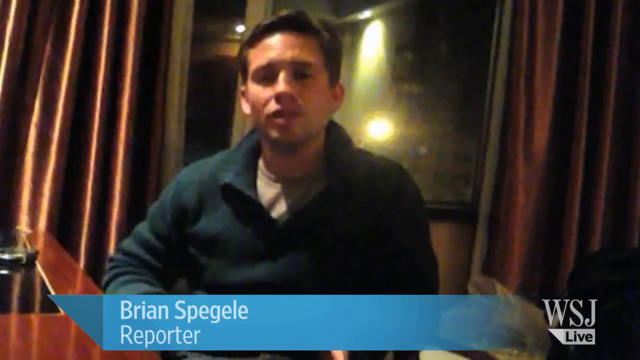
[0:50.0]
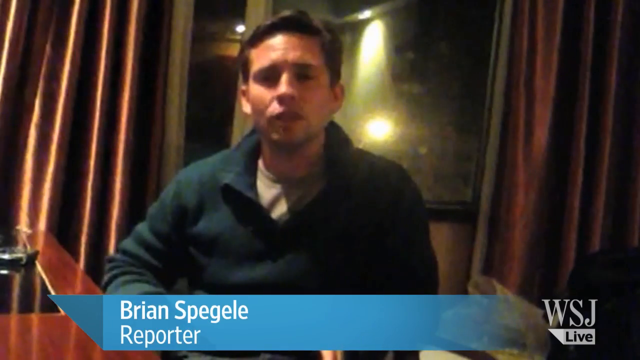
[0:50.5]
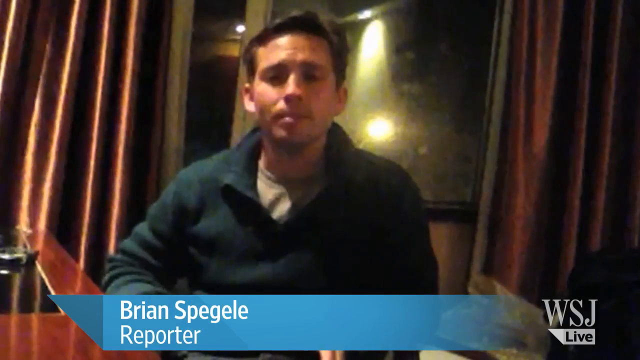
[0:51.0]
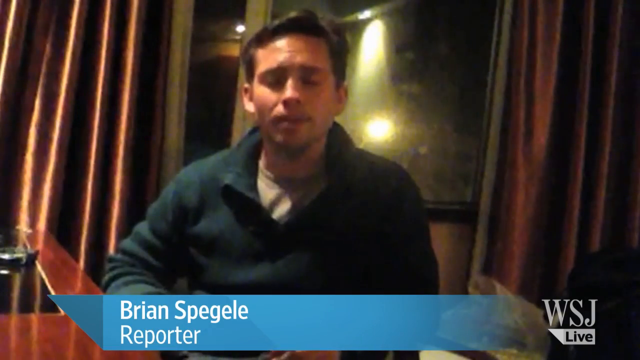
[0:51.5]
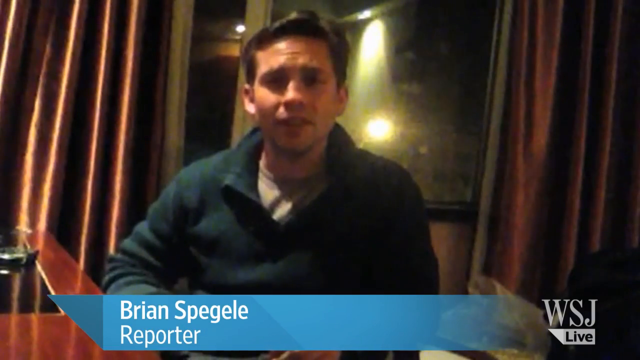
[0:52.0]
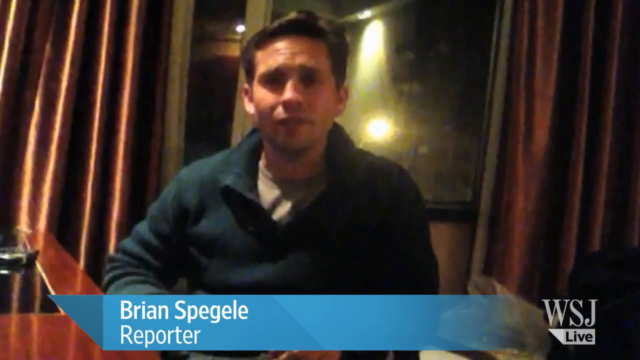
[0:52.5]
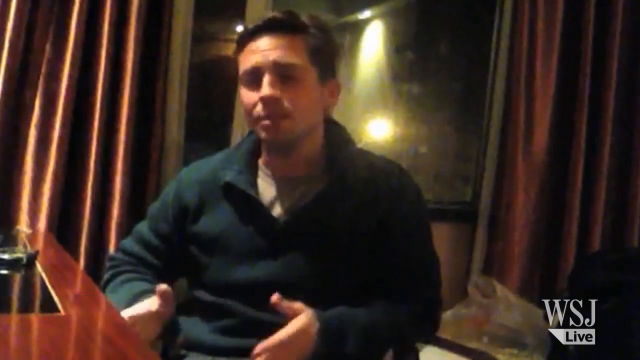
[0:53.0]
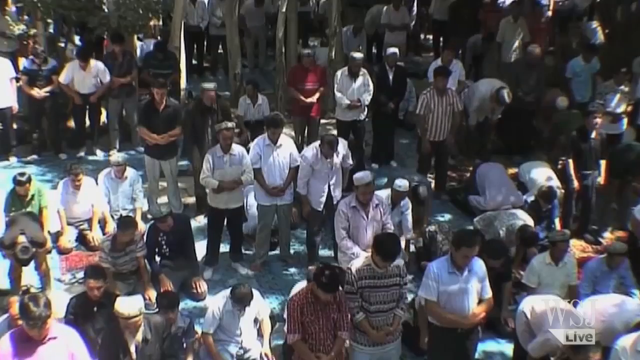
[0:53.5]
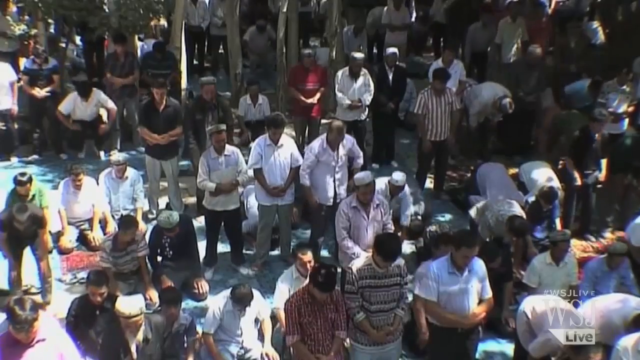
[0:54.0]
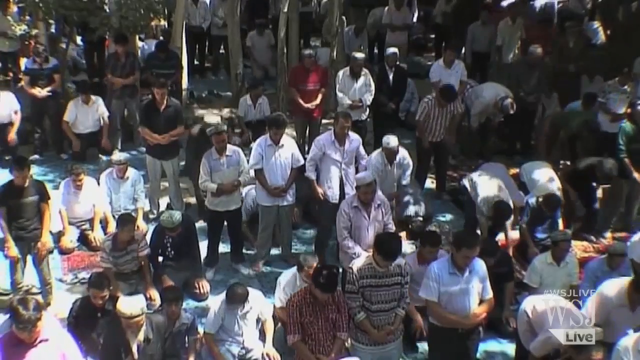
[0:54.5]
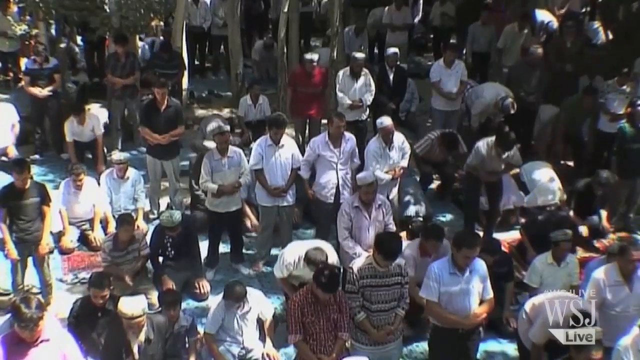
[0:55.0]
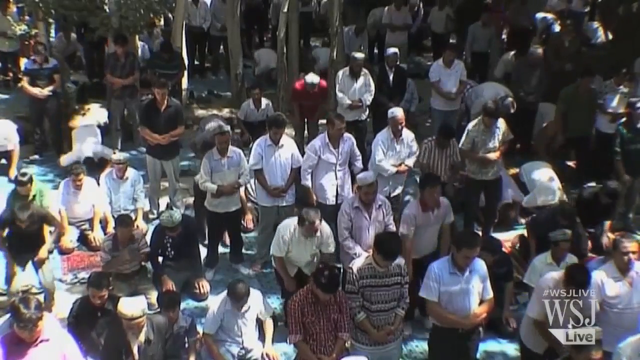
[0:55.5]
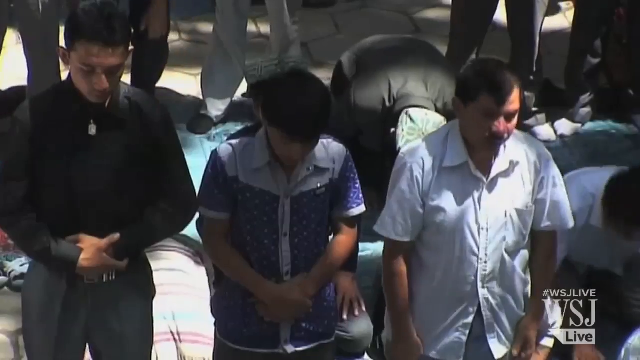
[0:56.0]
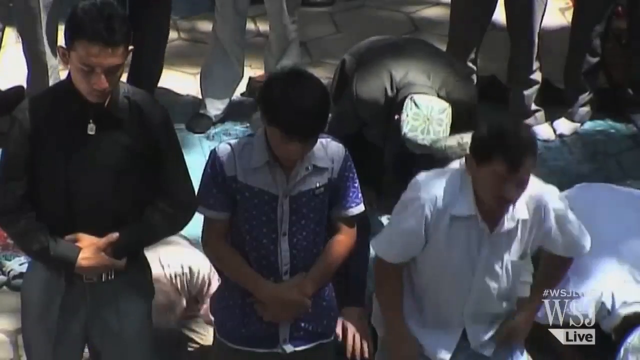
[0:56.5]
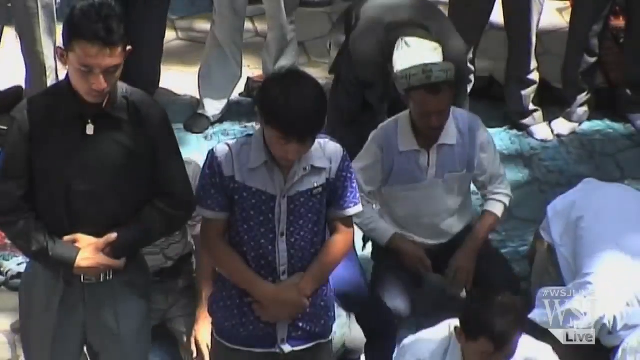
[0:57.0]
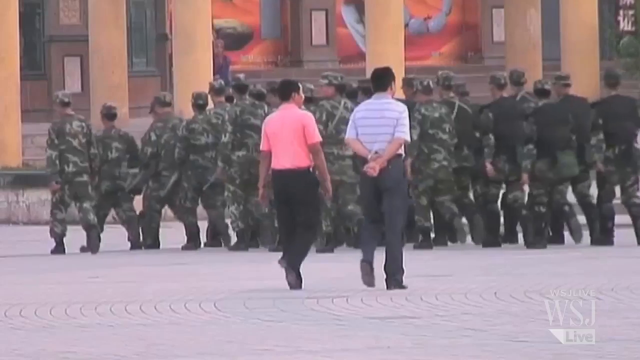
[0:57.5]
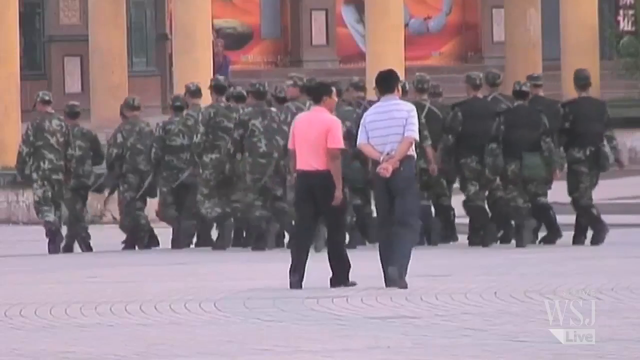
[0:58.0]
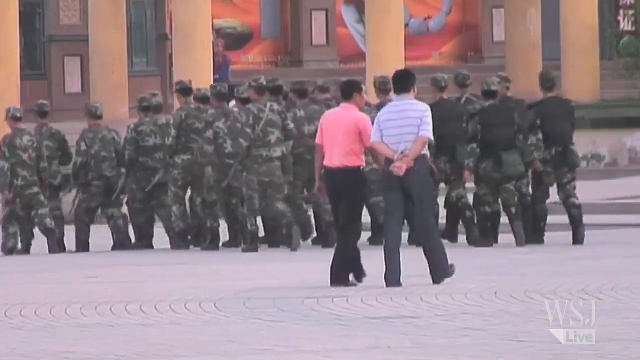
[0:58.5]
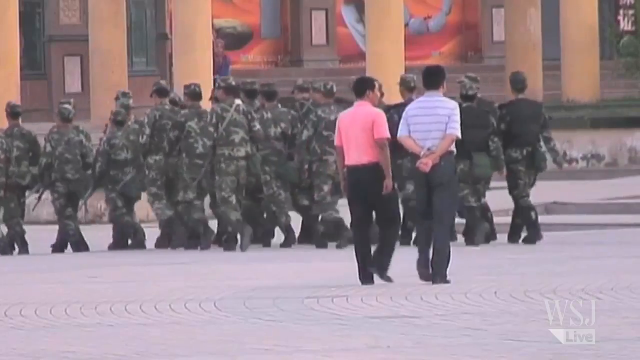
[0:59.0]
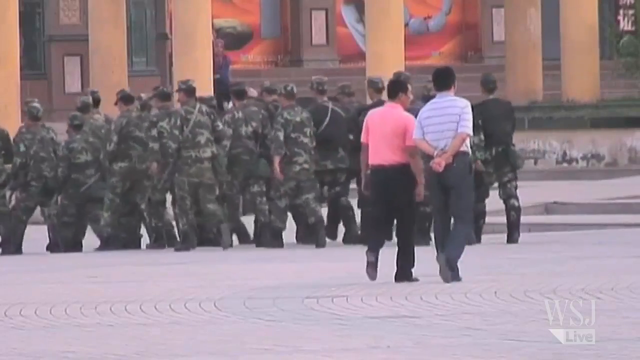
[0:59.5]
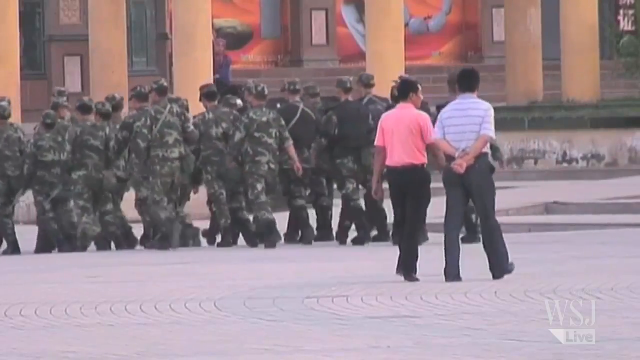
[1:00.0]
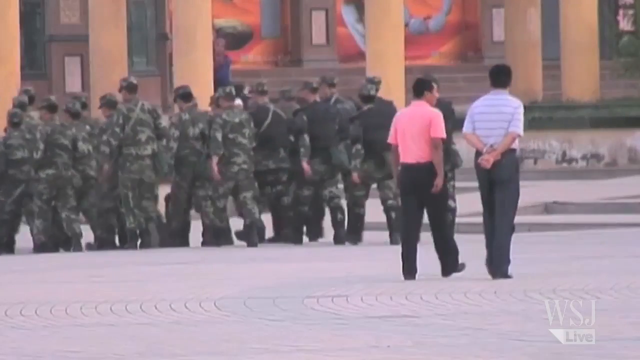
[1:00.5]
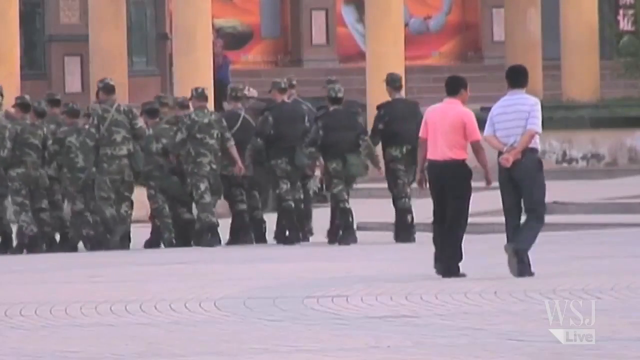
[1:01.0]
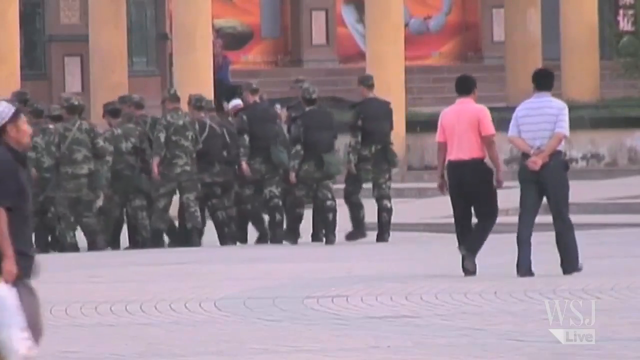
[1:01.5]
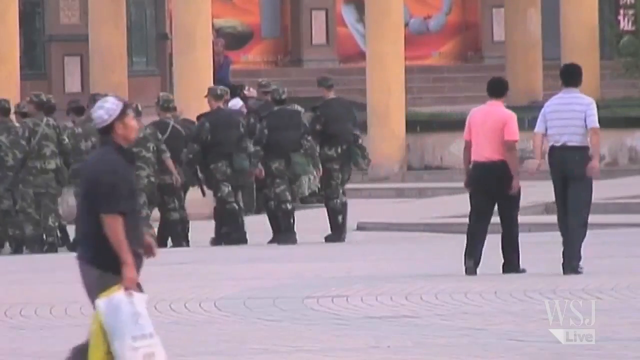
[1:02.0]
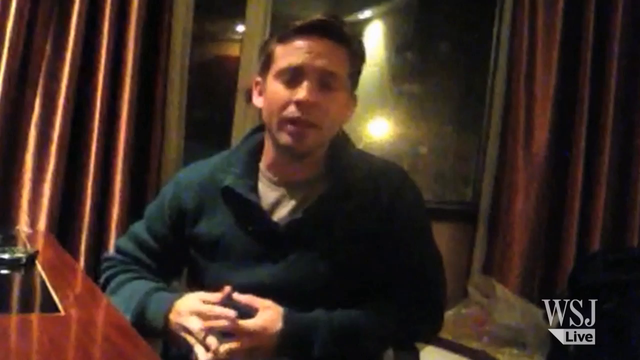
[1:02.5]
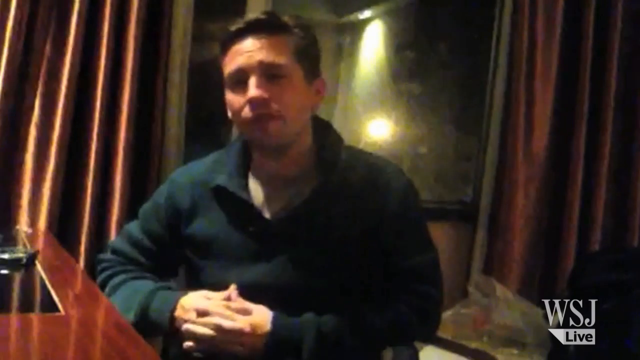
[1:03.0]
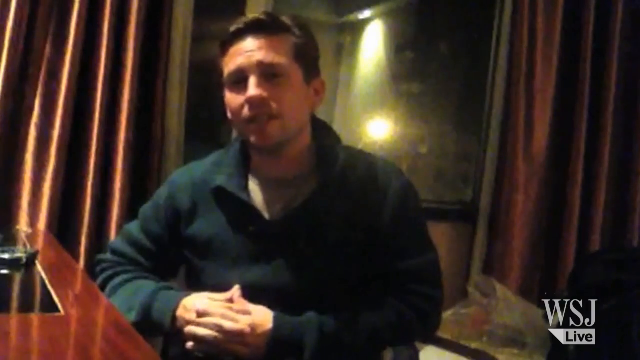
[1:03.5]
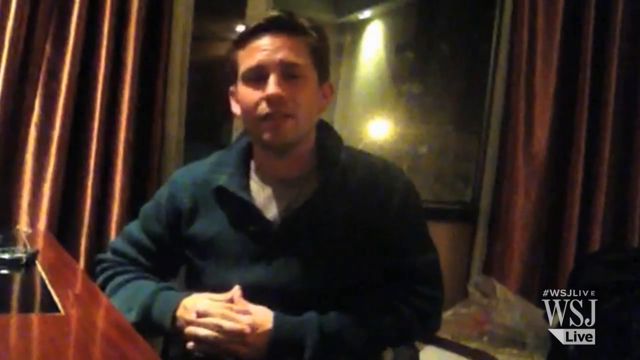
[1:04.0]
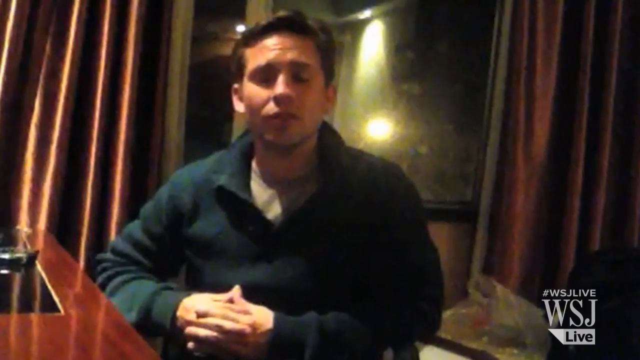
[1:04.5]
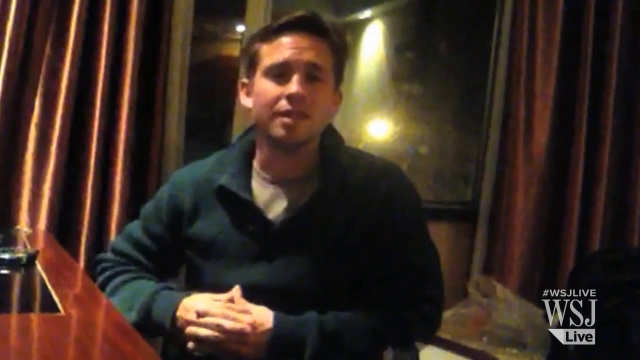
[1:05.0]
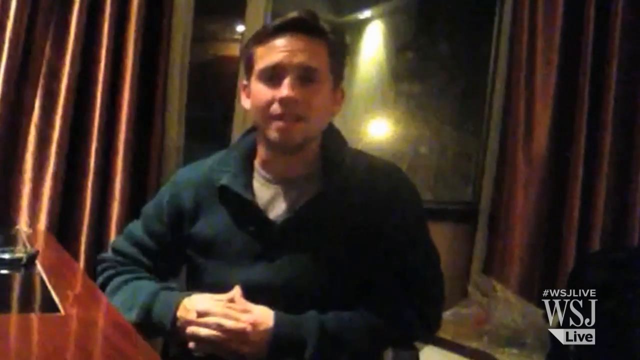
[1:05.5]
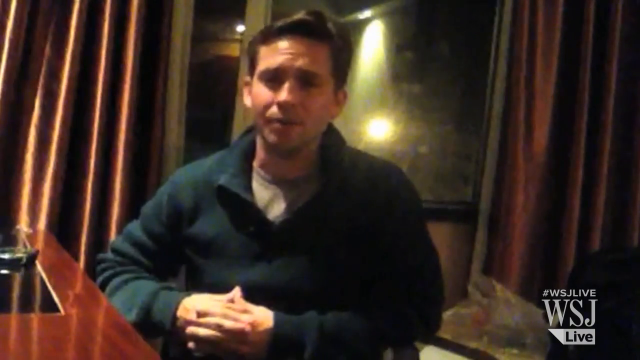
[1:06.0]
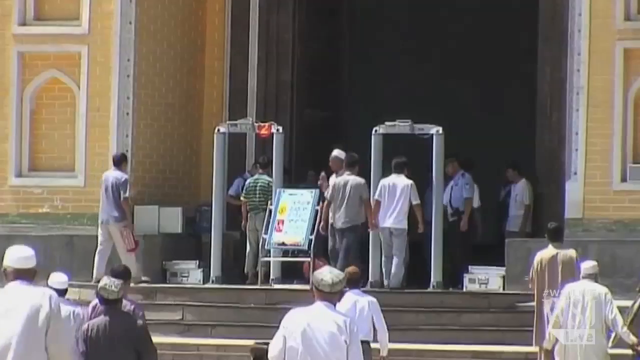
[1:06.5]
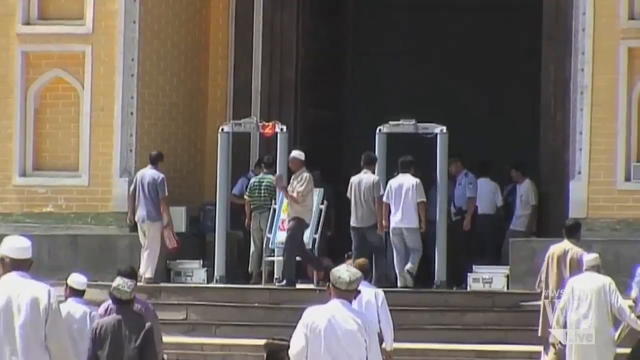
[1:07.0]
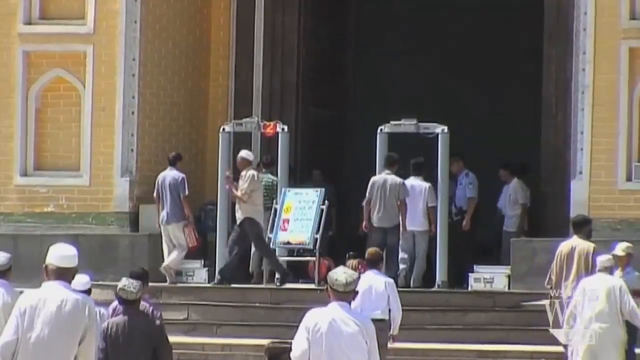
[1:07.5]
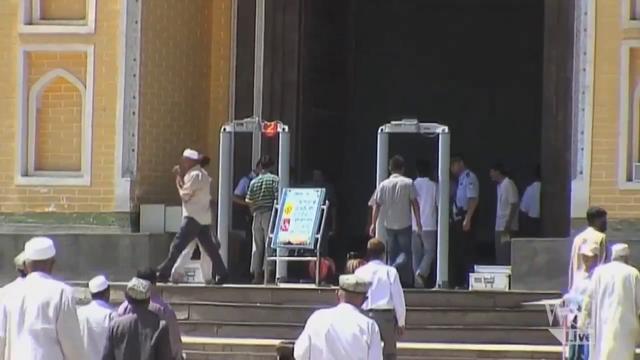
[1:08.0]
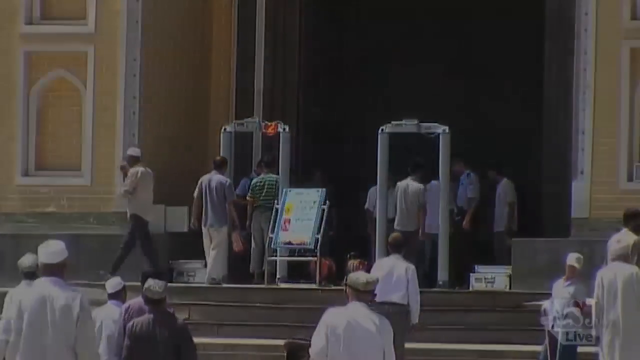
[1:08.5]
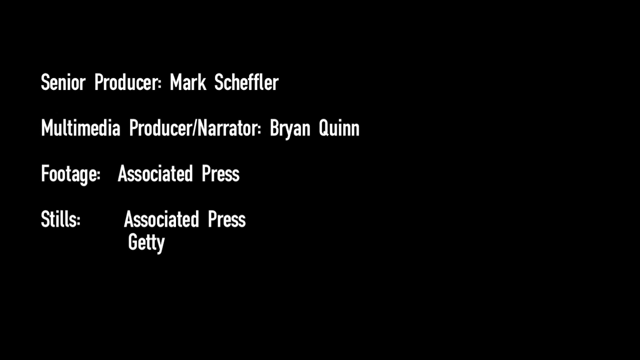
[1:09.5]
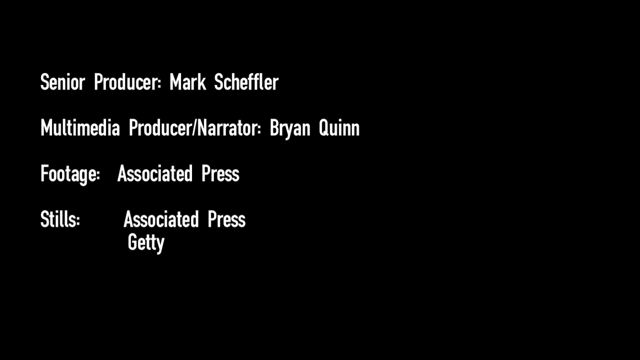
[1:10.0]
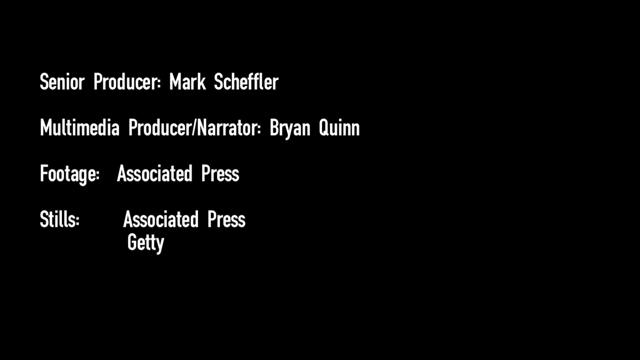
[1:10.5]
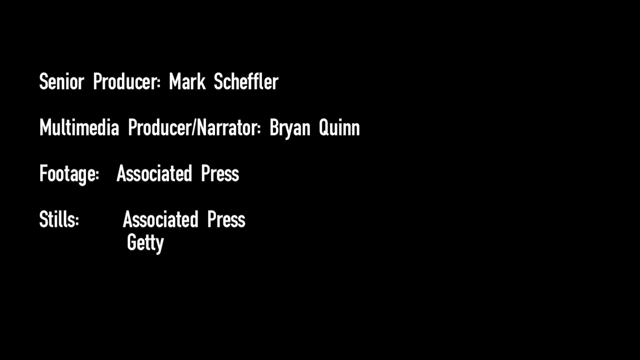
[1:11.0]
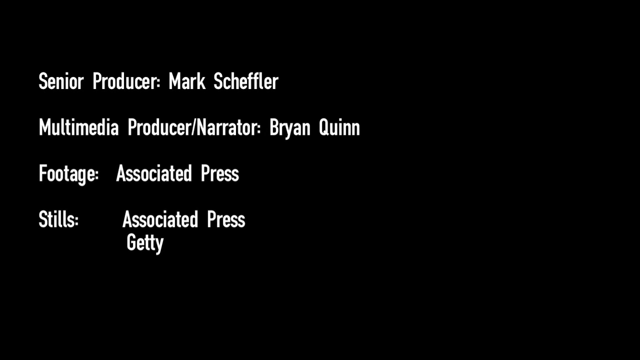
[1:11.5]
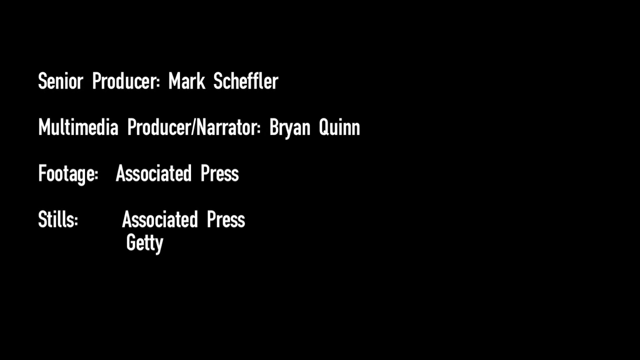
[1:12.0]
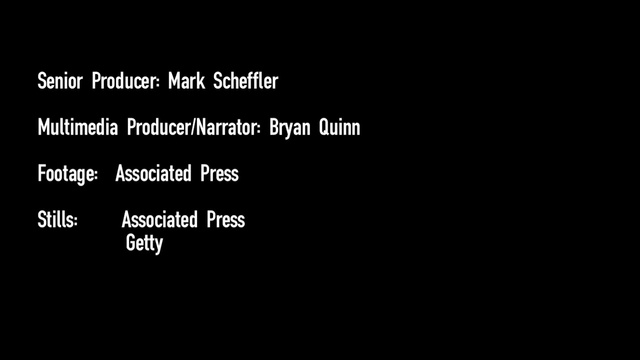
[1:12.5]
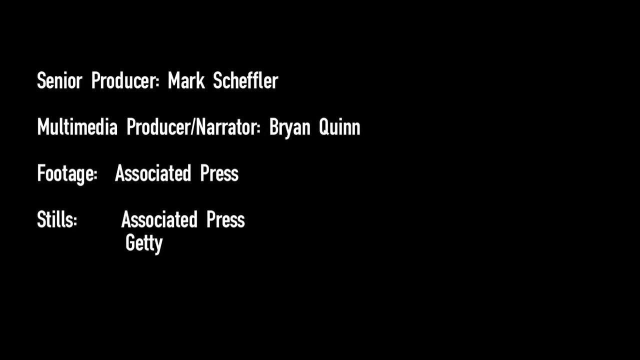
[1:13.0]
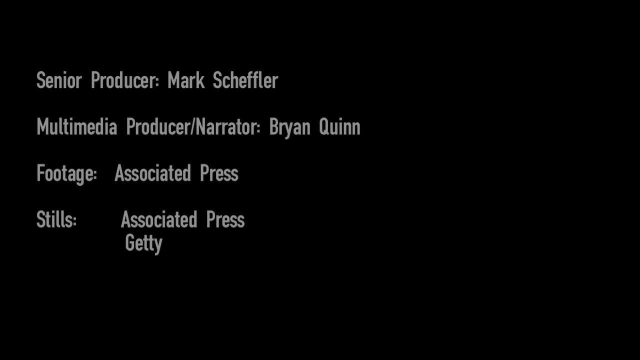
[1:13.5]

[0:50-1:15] A reporter appears in what looks like some kind of room. Text at the bottom reads "Brian a Spiegel" and identifies him as a reporter. It cuts to footage of what look like men praying on the ground: they bend over, kneel down praying, stand up, and keep repeating this. Next, a group of soldiers walks from the right side of the frame to the left and out of frame, and behind them two men, apparently civilians, walk out of frame towards the right side. It cuts back to the reporter, whose hands are kind of rested on what looks like a countertop as he talks to the camera; he looks very tired. It then cuts to what looks like people walking through metal detectors to get into some kind of yellow building. A closing card reads "senior producer mark Scheffler multimedia producer narrator Brian Quinn footage associated press stills associated press and Getty," and the video ends.